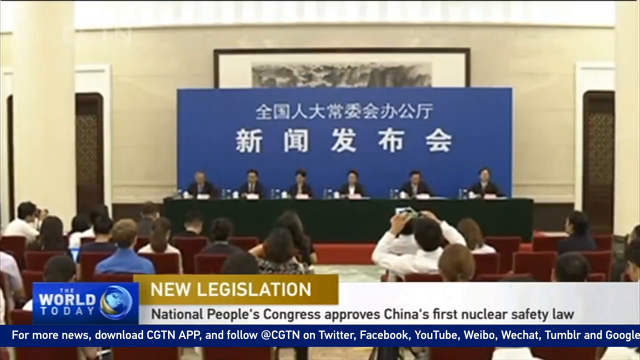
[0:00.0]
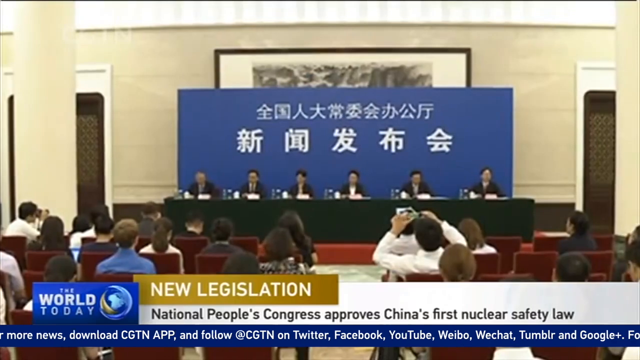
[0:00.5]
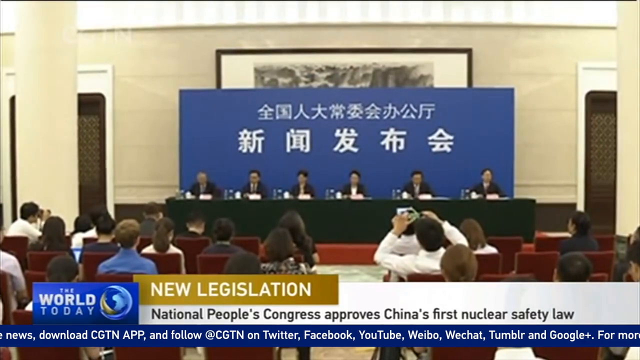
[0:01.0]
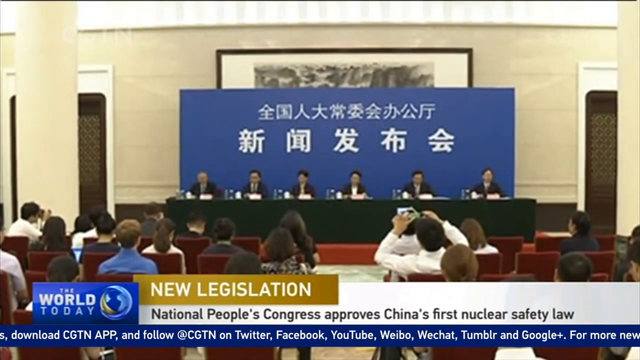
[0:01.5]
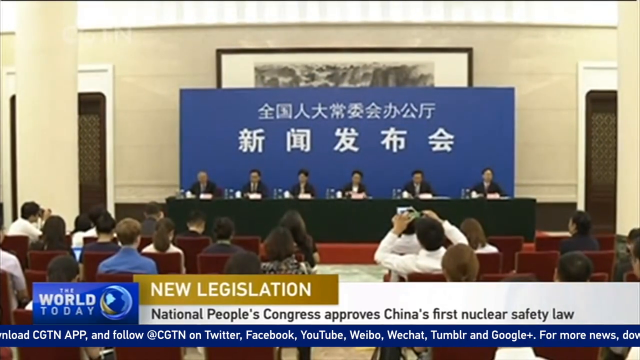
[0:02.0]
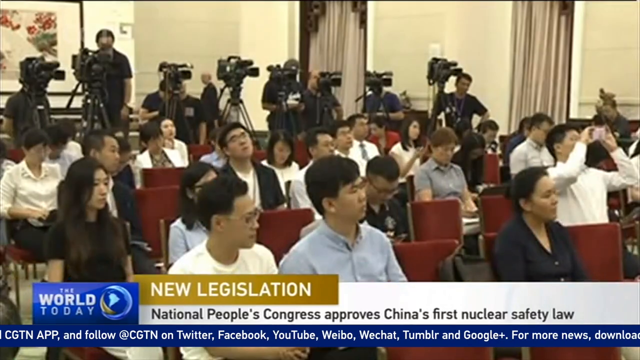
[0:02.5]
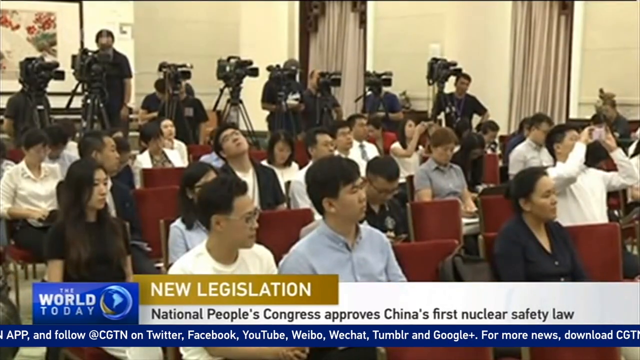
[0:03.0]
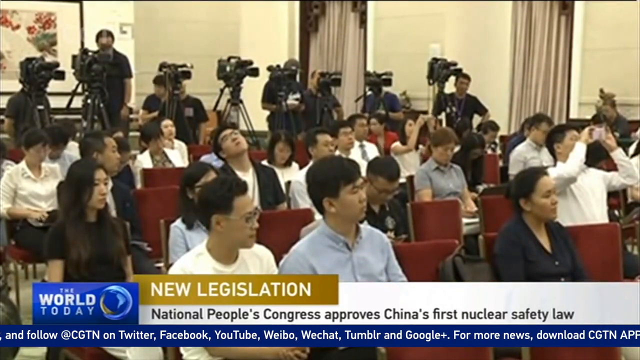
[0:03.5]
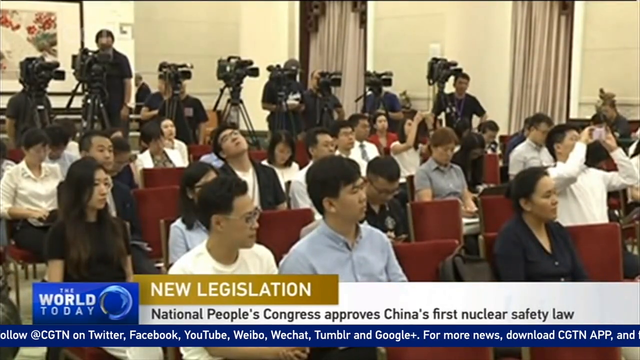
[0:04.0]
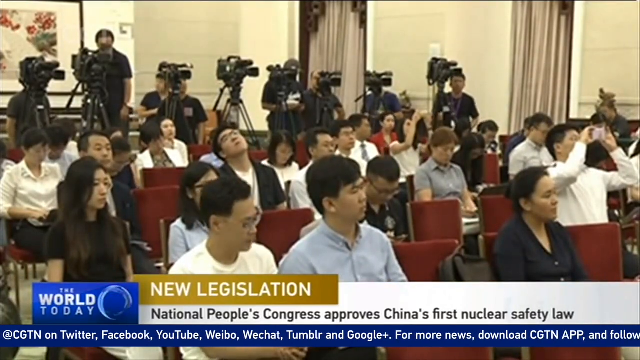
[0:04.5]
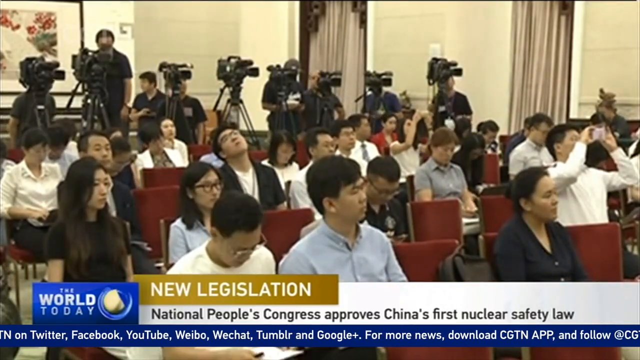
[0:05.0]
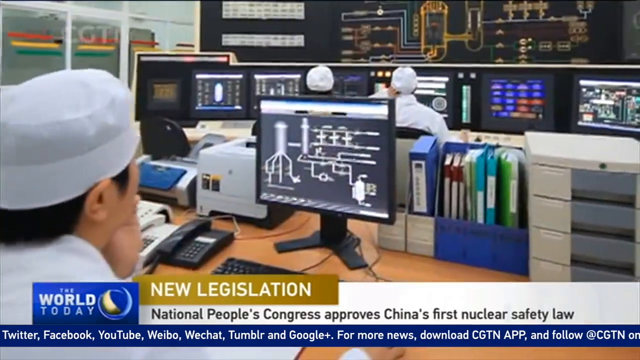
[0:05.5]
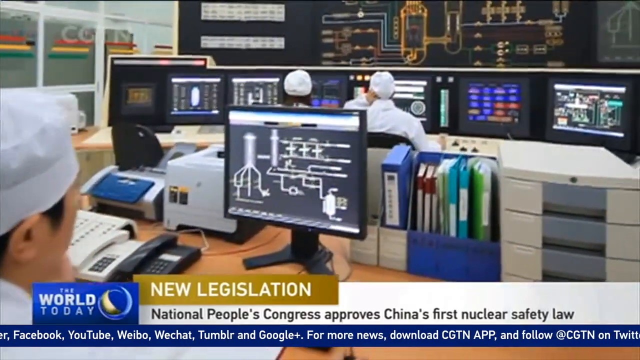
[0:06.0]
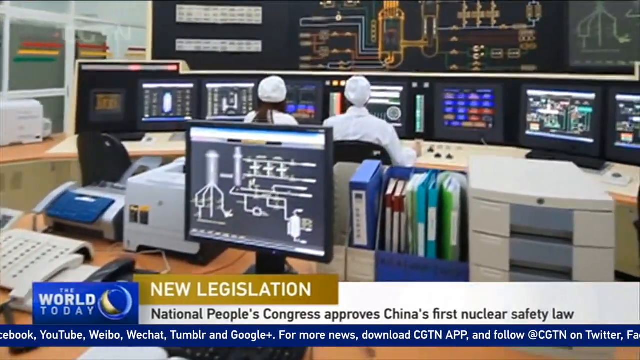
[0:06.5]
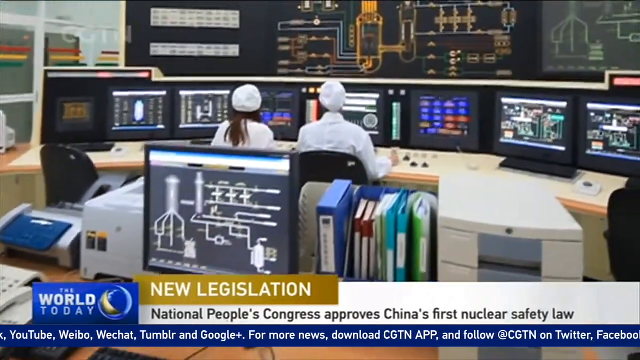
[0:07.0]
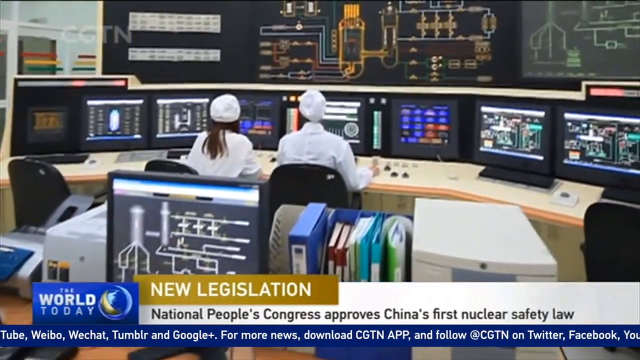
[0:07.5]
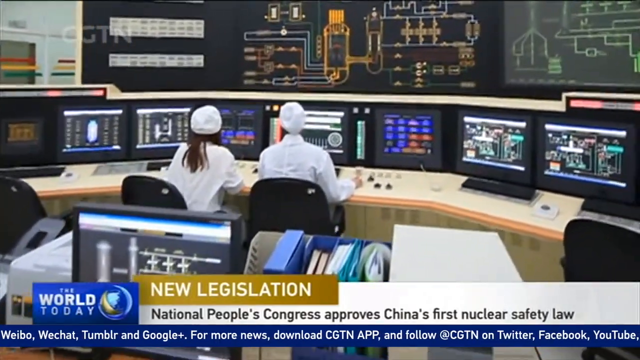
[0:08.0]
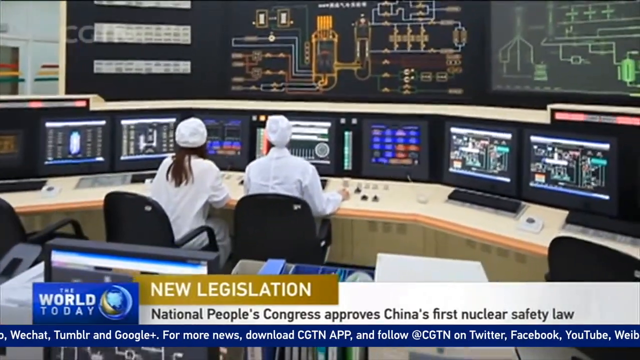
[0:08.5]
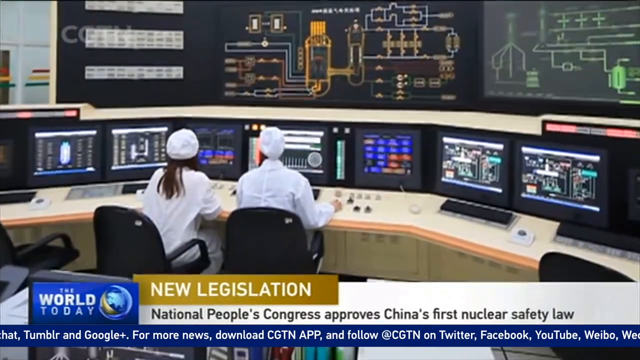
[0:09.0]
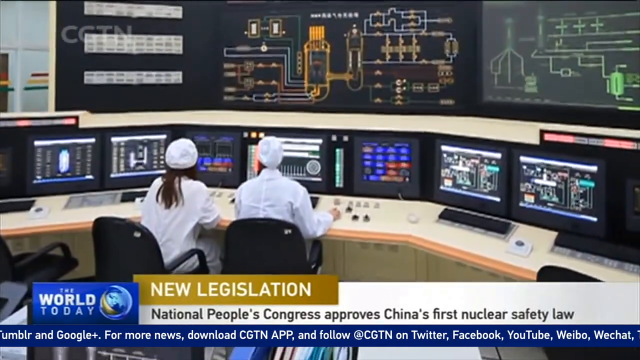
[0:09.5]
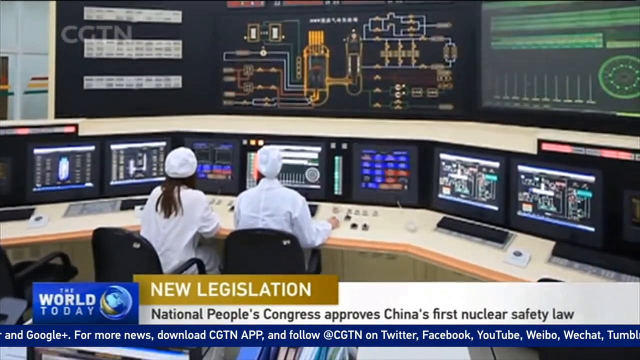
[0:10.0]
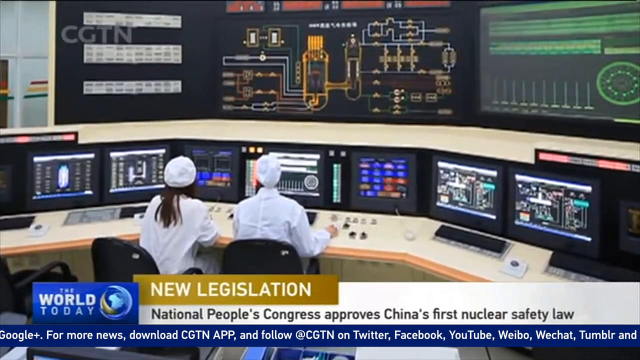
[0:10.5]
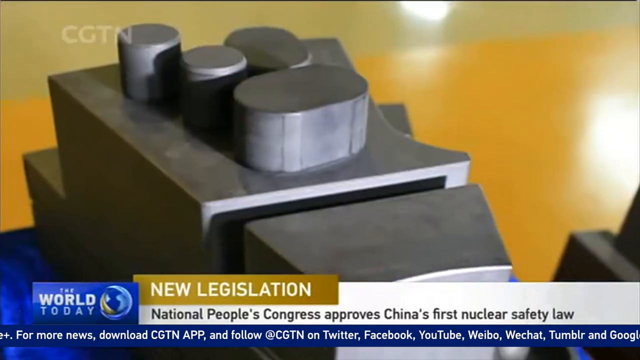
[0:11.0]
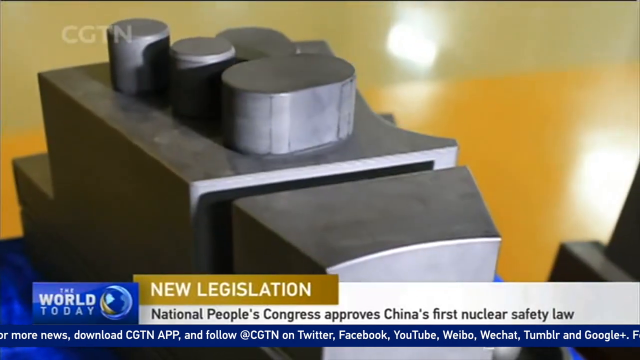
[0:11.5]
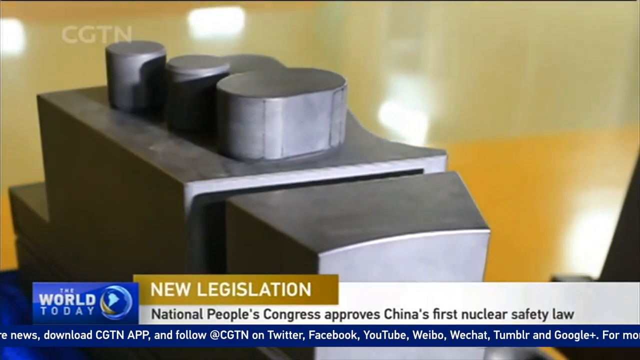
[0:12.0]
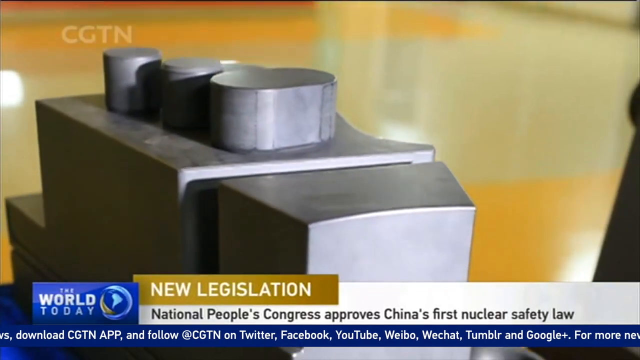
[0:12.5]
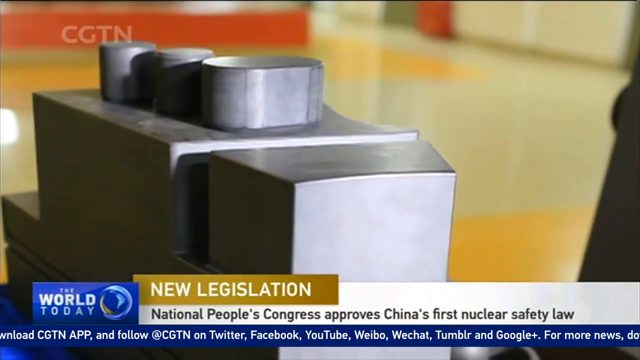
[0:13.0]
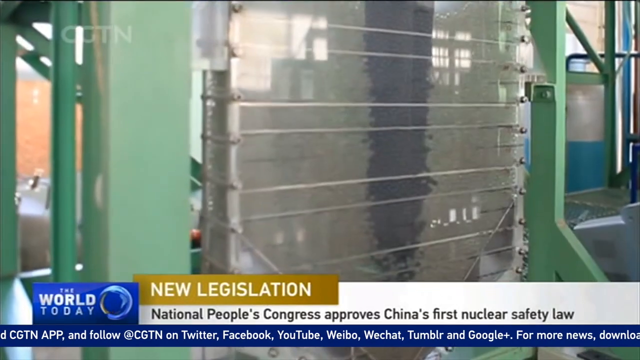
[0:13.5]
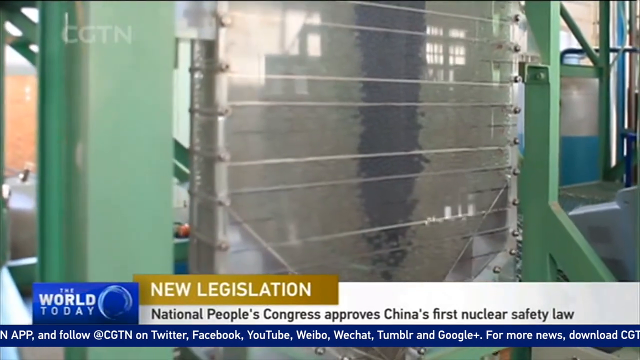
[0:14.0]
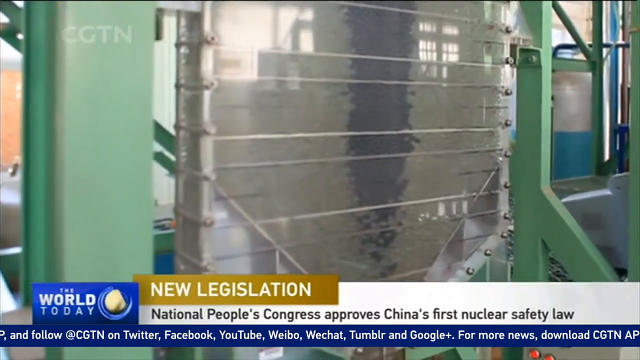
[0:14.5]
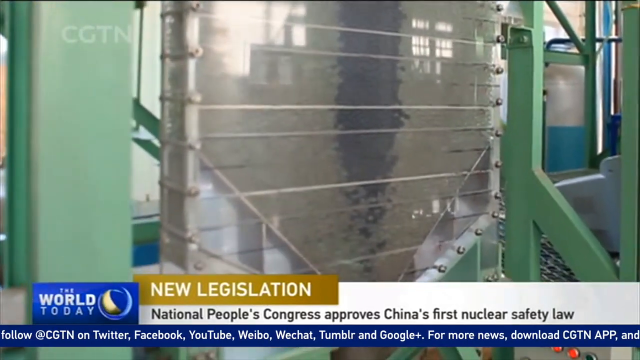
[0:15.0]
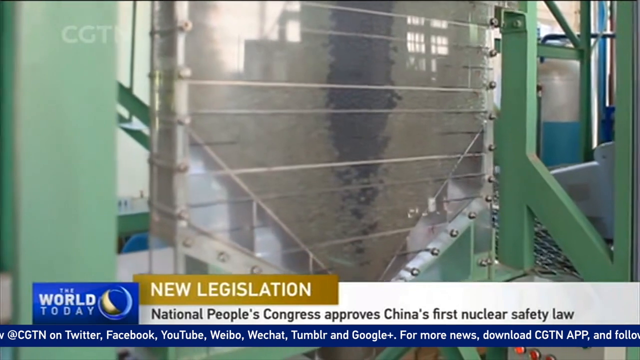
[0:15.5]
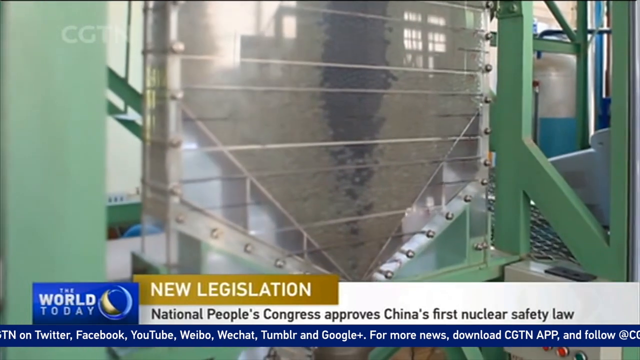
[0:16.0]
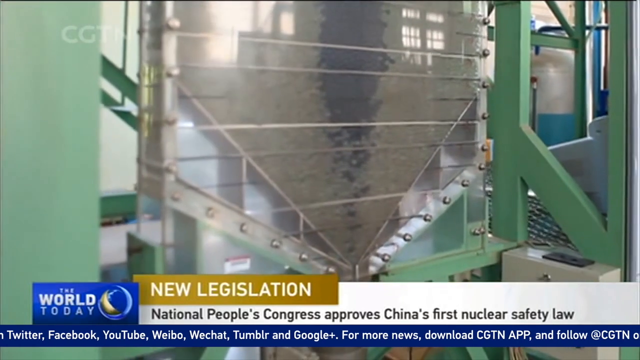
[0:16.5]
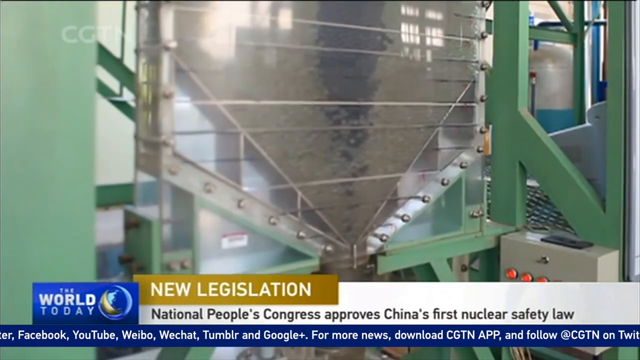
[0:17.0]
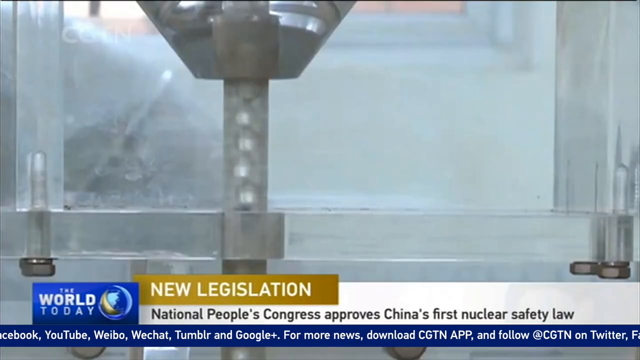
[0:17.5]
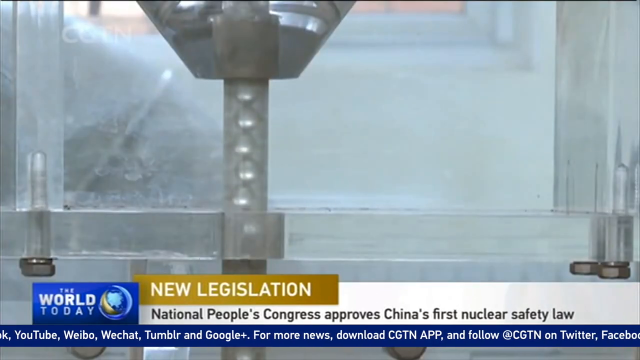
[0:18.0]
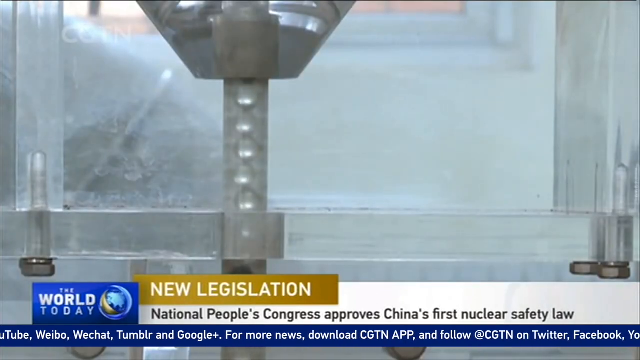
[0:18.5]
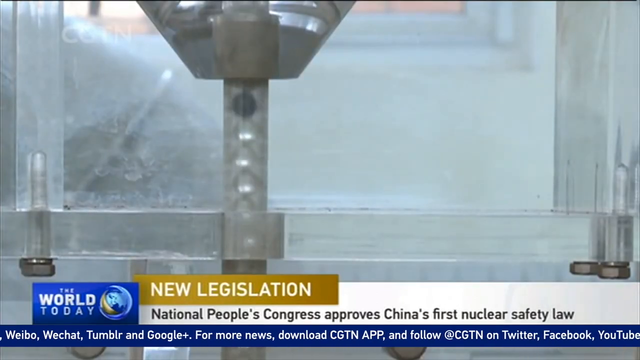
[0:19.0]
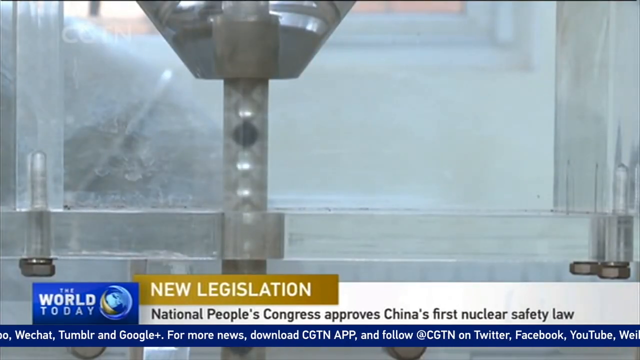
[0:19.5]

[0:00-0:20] A headline at the bottom left reads "new legislation, National People's Congress approves China's first nuclear safety law." To the left of it, text reads "the world today" beside an animated spinning globe featuring a series of continents. Below that, a running line of text keeps scrolling: "follow at CGTN on Twitter, Facebook, YouTube, Weibo, WeChat, Tumblr, and Google+. For more news, download CGTN app and follow at CGTN." The scene is a conference of apparently Chinese professionals, who seem to be discussing the new legislation. Behind them is a blue background that looks like a big rectangular piece of cardboard colored blue, with a series of Chinese characters above it. They are seated at a black conference table with their name labels and microphones. Judging from the silhouettes, there are possibly at least three men; from one side to the other they appear to be a man, a man, a woman, a woman, a man, and a woman. The audience is seated on what appear to be red cushioned chairs, and the building seems to be supported by big white columns. Part of the audience is visible: a couple of people who appear to be news reporters, most of them apparently Asian or Chinese, and quite a lot of professional video cameras, at least eight of them manned by videographers, most of whom apparently wear black polo shirts or t-shirts. Next comes a short view inside what appears to be a nuclear power plant, where nuclear professionals man desktop monitors, wearing white lab coats and white coverings over their heads. A bigger LCD screen in front of them appears to show schematics of a nuclear reactor; it looks to be made of three huge LCD monitors strung together, with the three displays simultaneously showing different pieces of information. A watermark at the top left reads "CGTN."